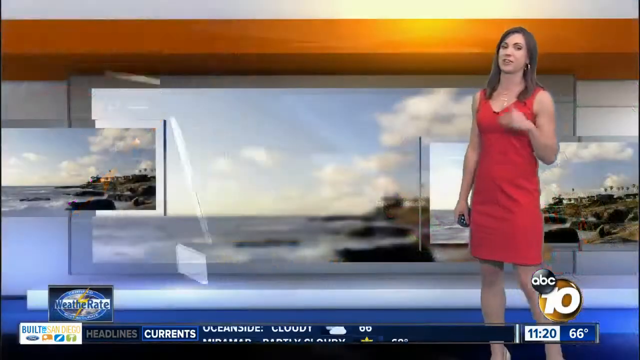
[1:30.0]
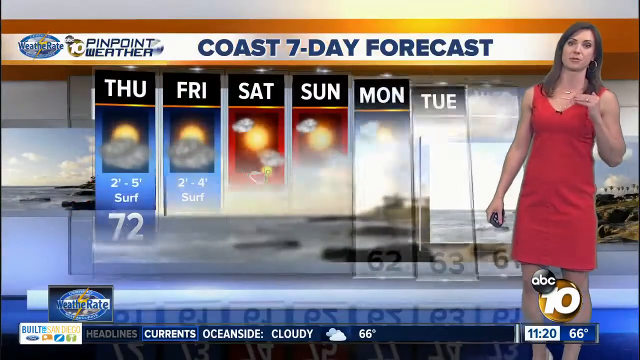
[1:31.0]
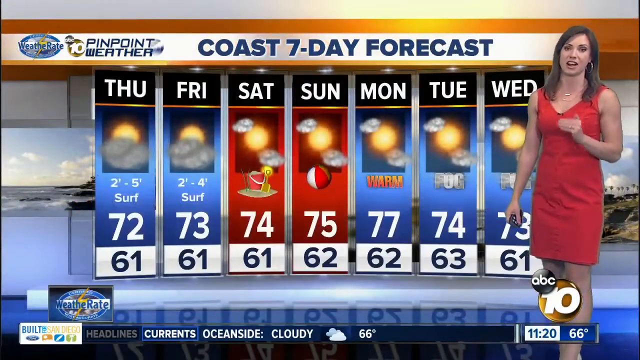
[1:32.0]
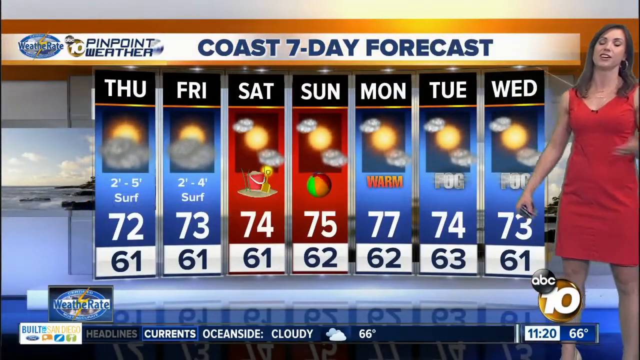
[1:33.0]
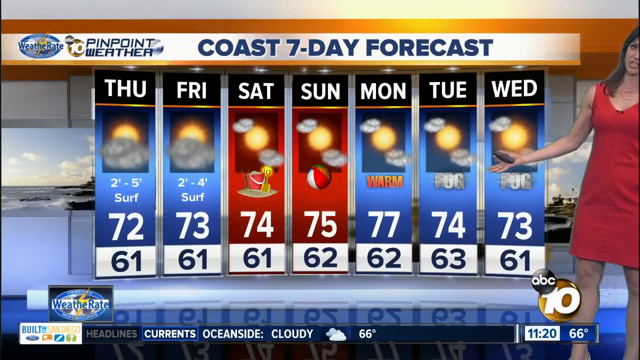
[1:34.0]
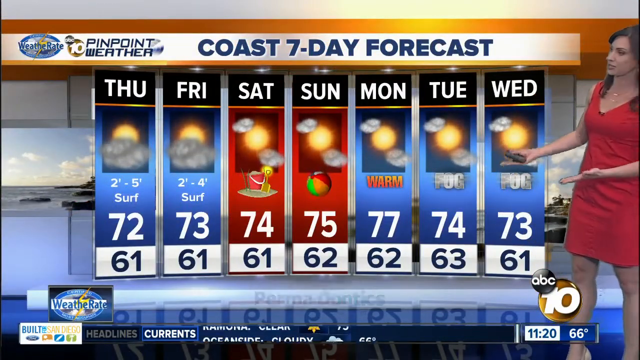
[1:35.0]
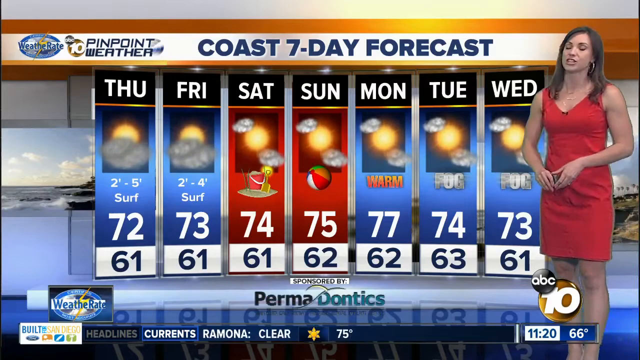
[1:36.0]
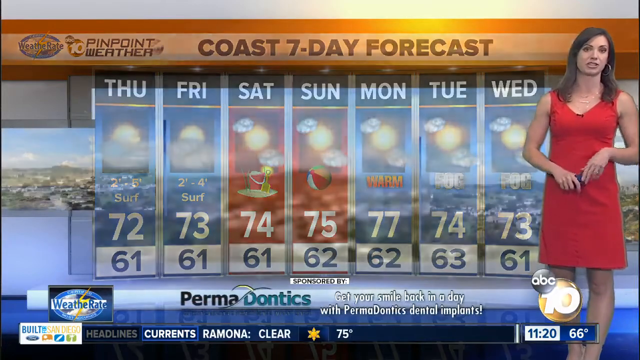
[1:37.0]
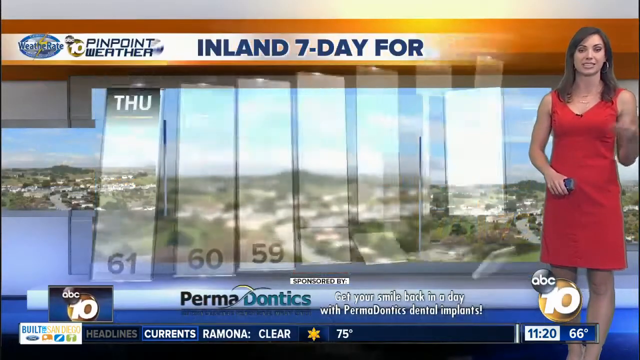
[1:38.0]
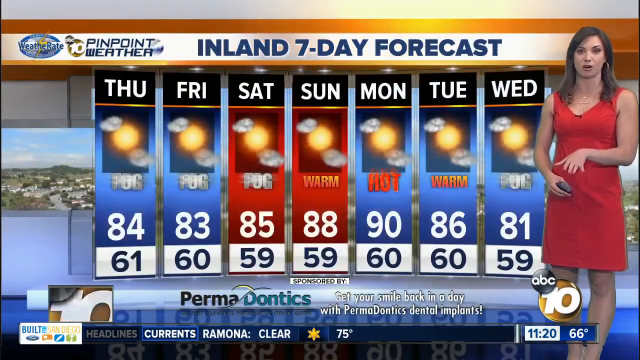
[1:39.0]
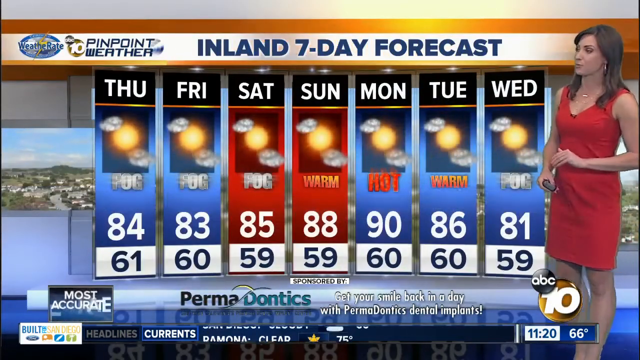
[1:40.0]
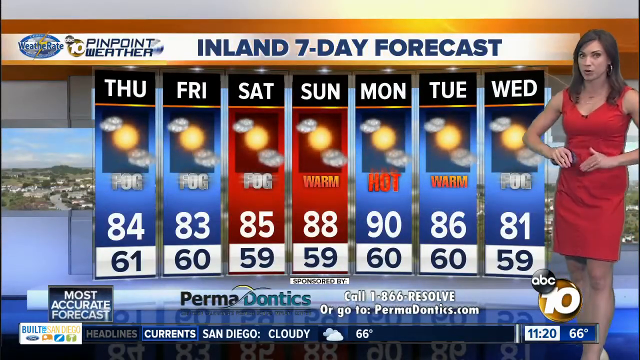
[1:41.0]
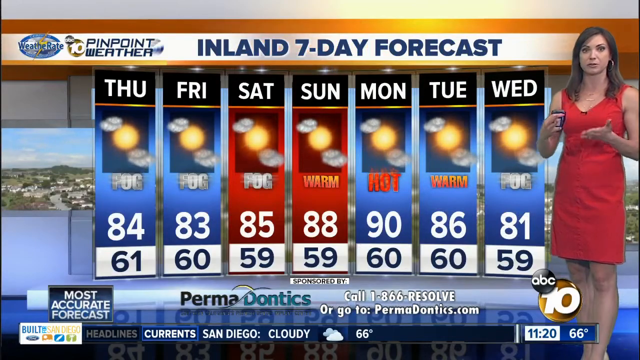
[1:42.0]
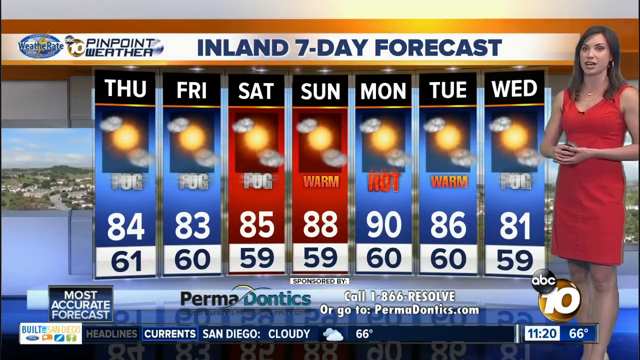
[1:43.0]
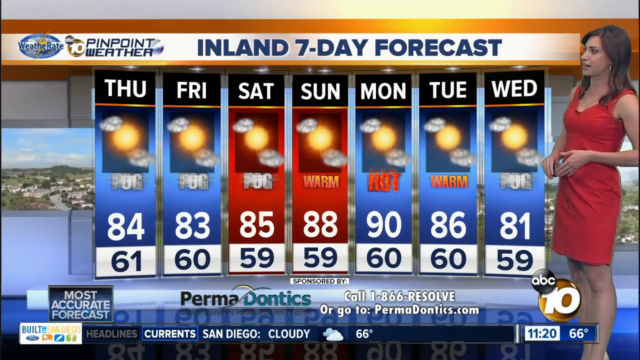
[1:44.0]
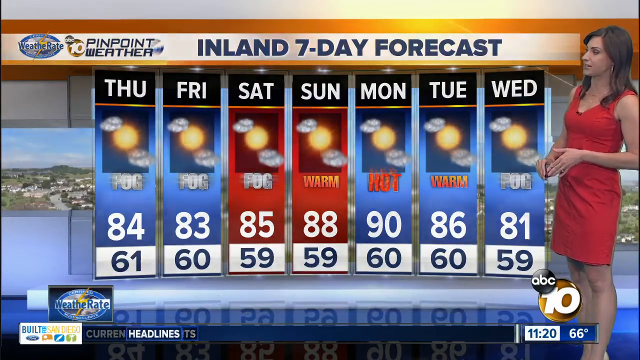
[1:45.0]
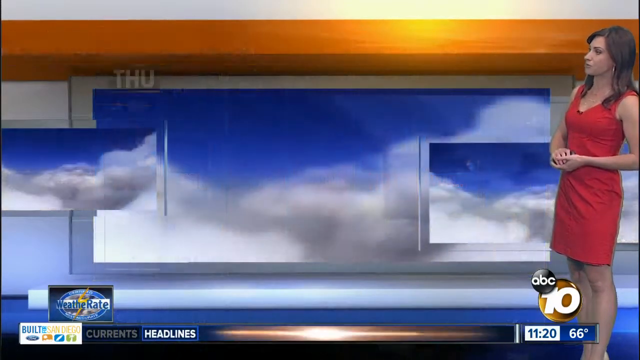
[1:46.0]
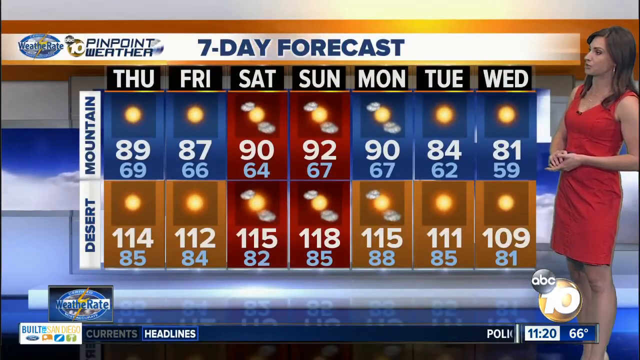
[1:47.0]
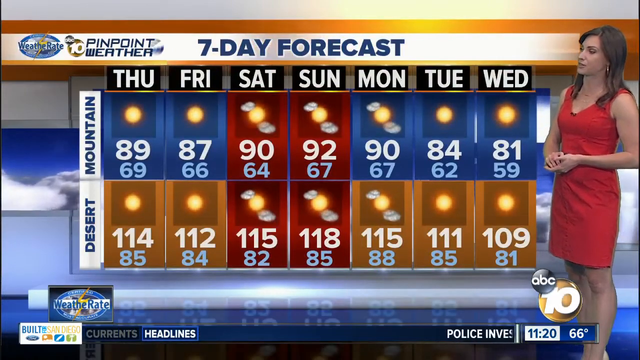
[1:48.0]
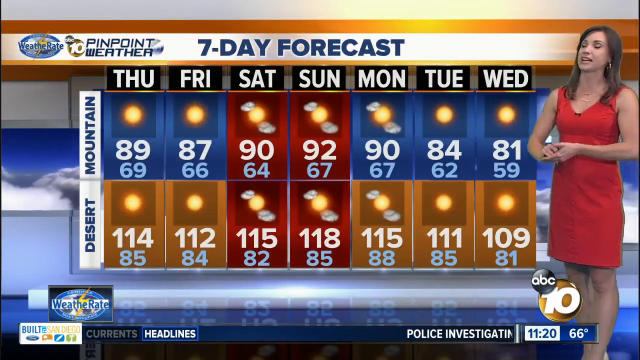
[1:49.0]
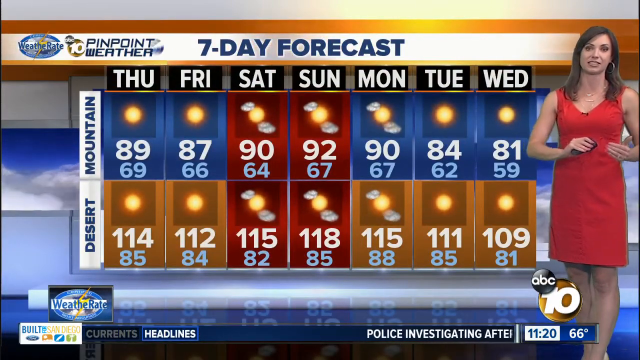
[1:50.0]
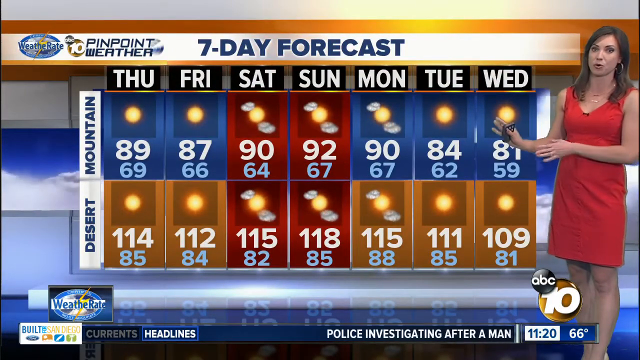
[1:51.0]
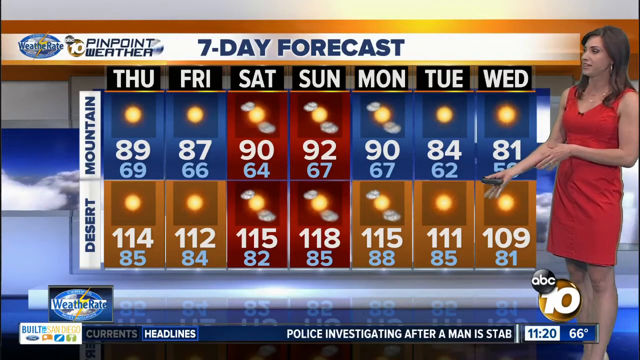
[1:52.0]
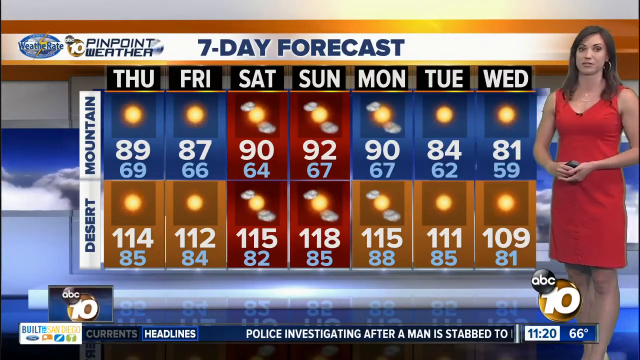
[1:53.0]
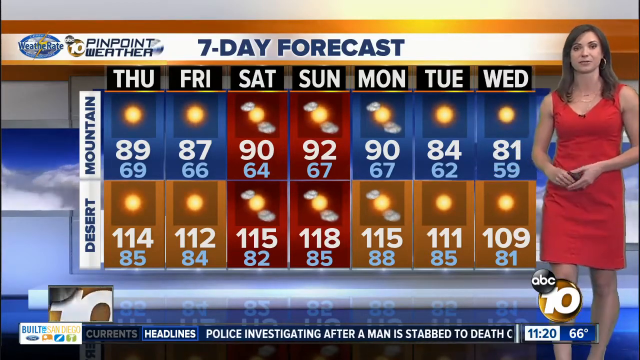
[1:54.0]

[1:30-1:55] A 7-day forecast is shown with the days Thursday, Friday, Saturday, Sunday, Monday, Tuesday, Wednesday and back to Thursday. The presenter brings up two areas, the mountain and the desert, with figures for each, some warm and some hot.